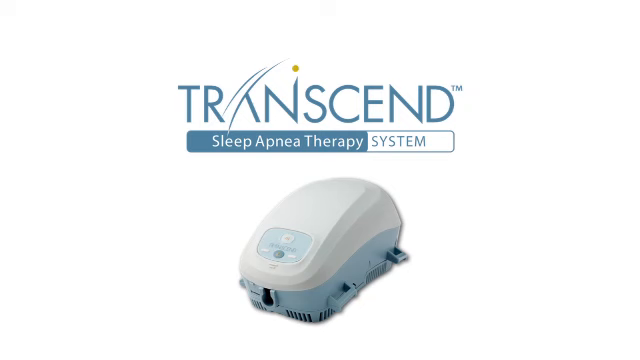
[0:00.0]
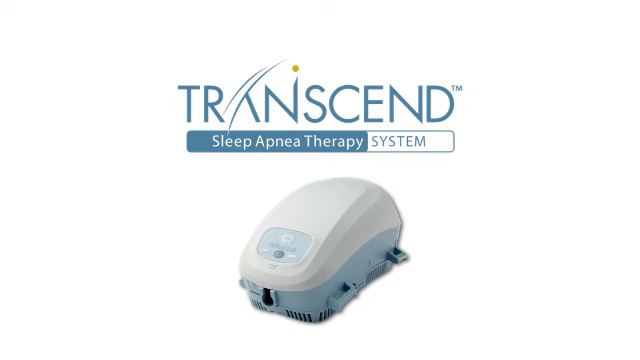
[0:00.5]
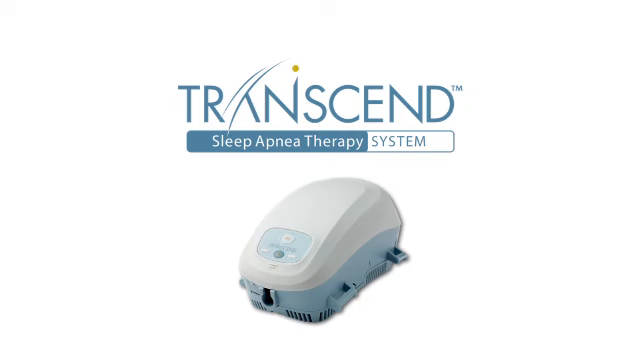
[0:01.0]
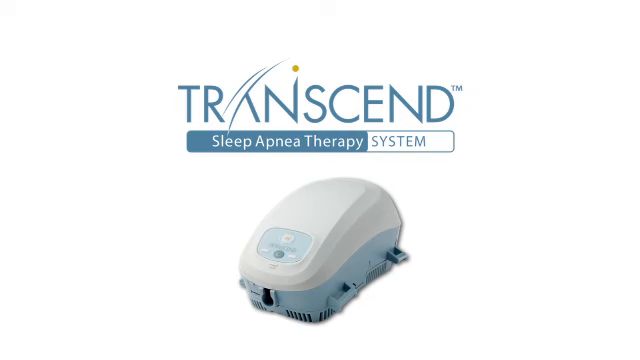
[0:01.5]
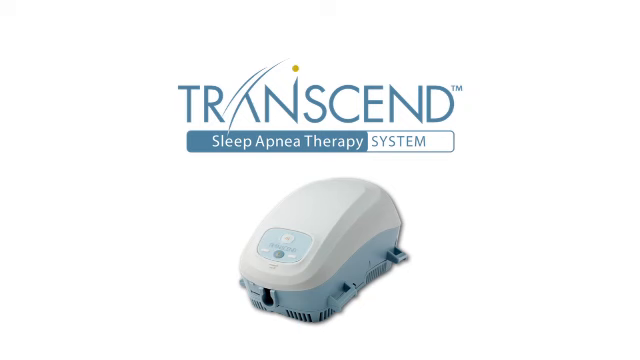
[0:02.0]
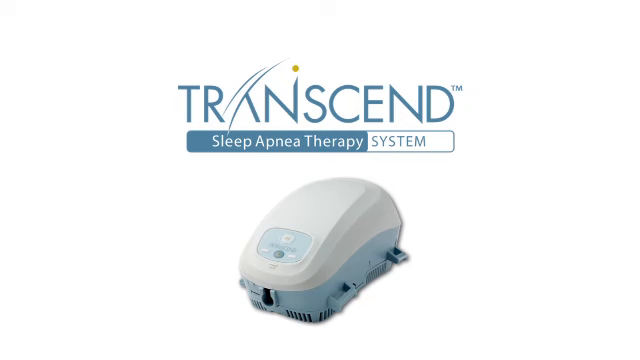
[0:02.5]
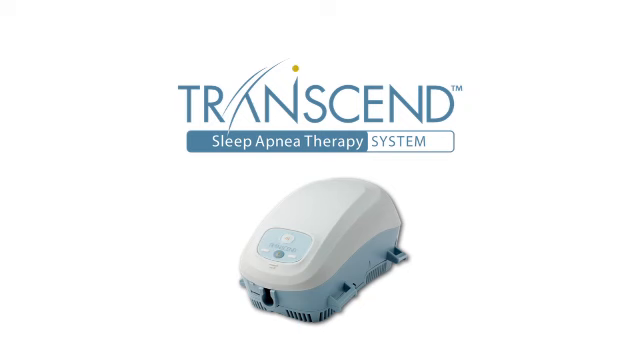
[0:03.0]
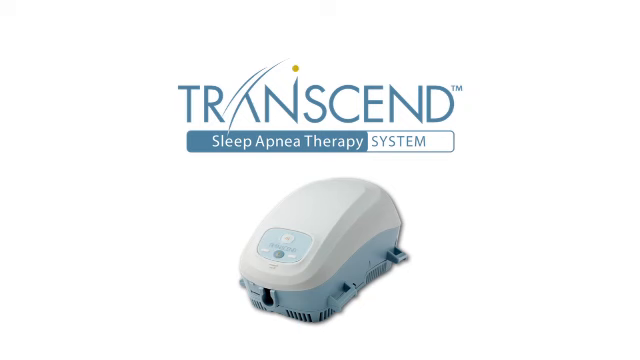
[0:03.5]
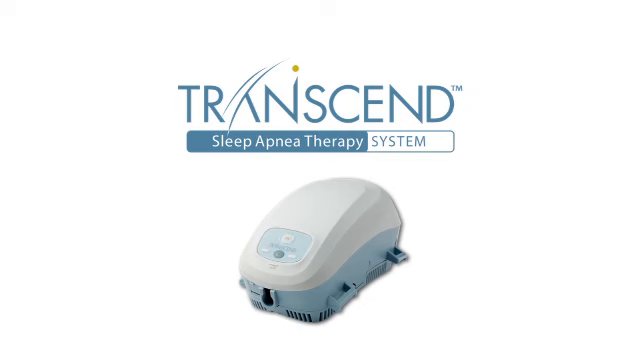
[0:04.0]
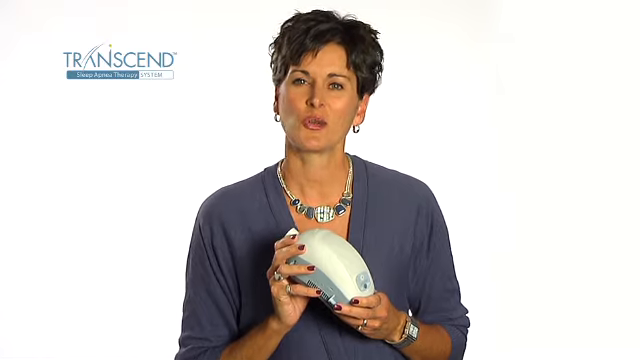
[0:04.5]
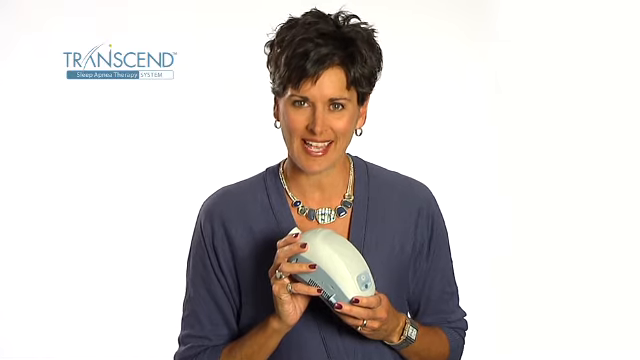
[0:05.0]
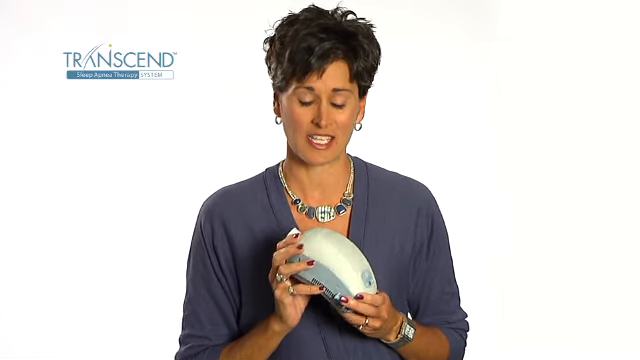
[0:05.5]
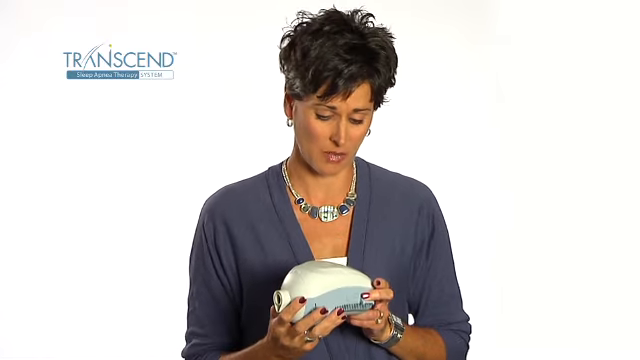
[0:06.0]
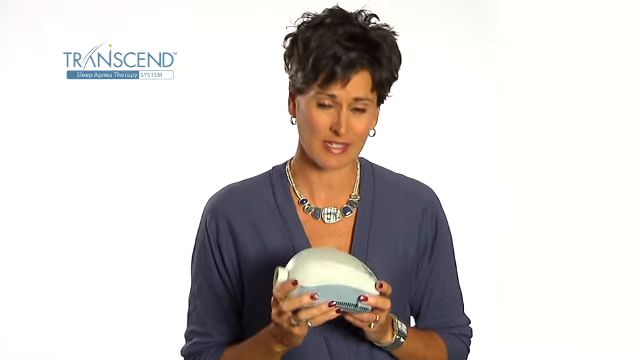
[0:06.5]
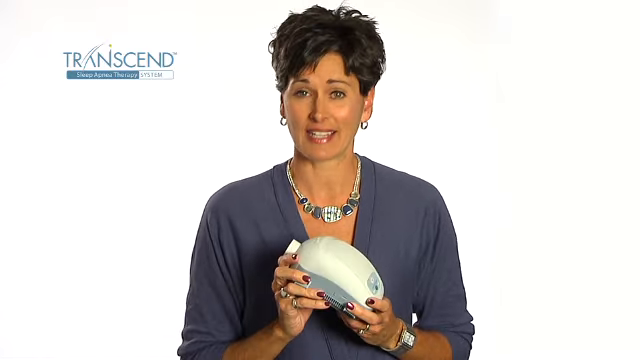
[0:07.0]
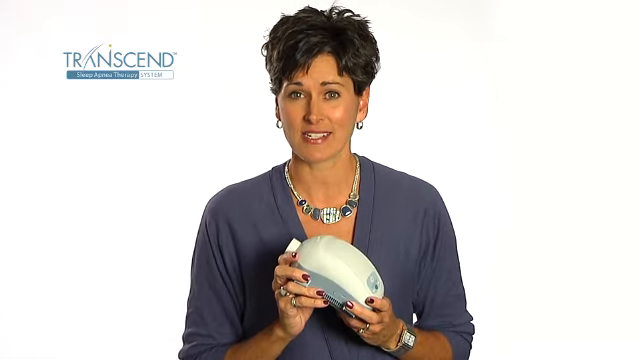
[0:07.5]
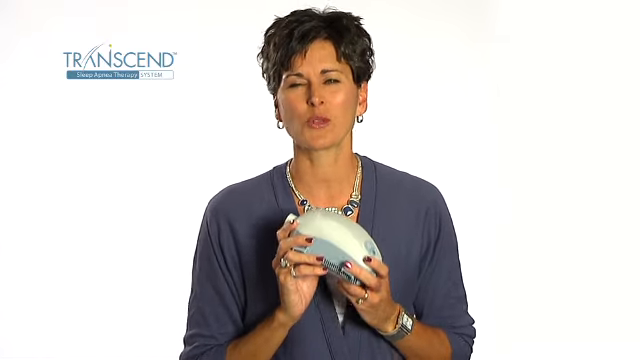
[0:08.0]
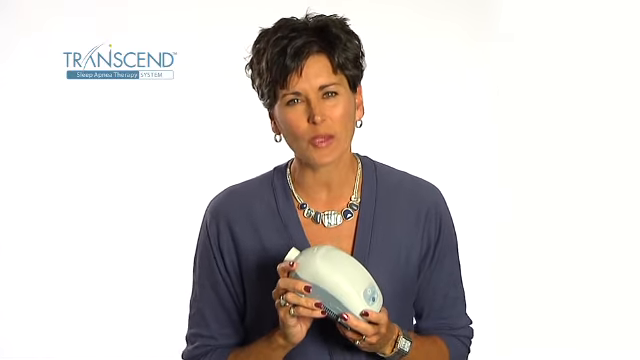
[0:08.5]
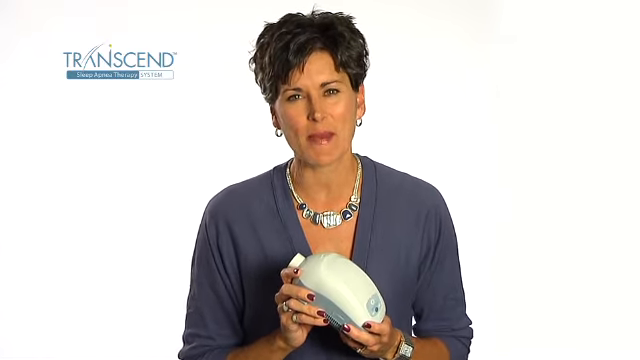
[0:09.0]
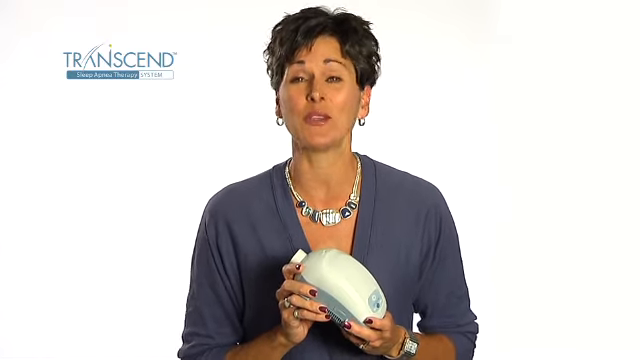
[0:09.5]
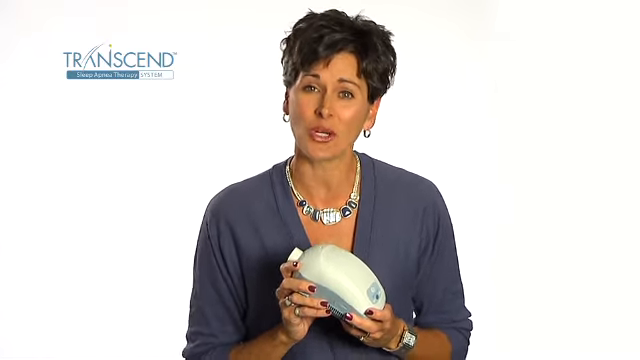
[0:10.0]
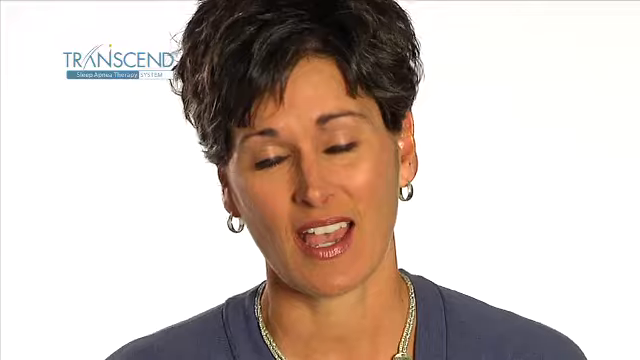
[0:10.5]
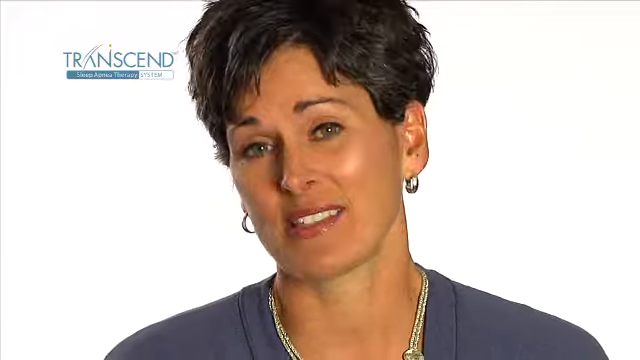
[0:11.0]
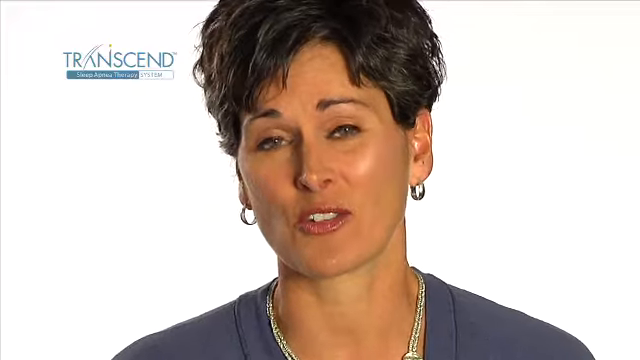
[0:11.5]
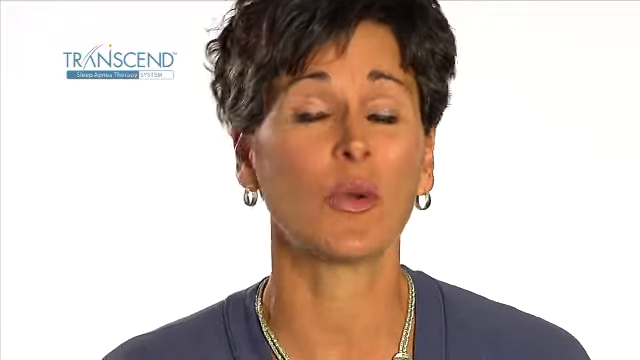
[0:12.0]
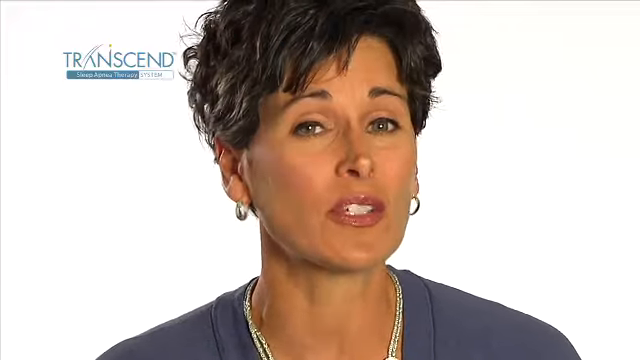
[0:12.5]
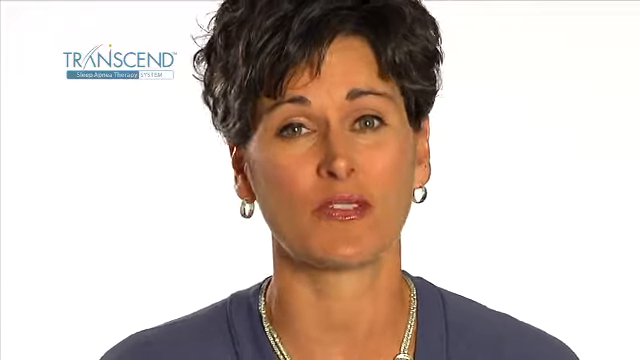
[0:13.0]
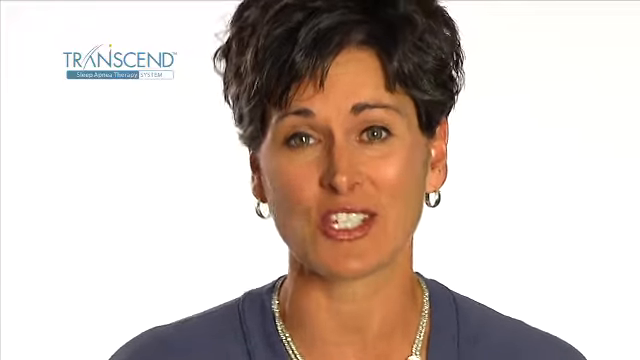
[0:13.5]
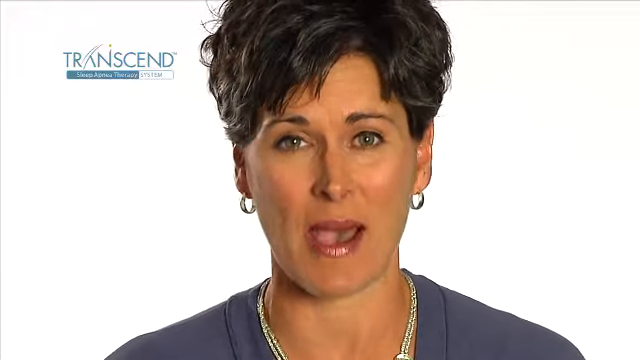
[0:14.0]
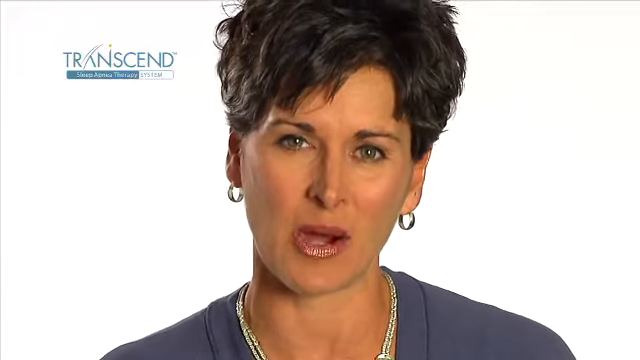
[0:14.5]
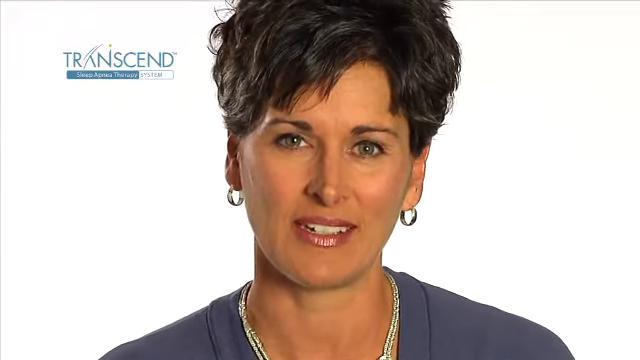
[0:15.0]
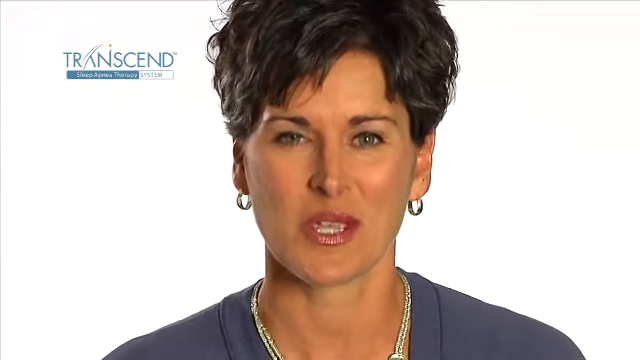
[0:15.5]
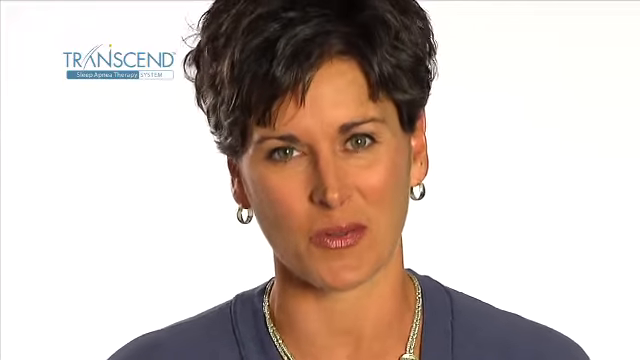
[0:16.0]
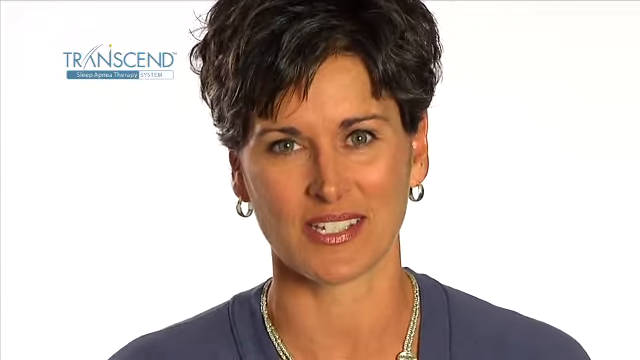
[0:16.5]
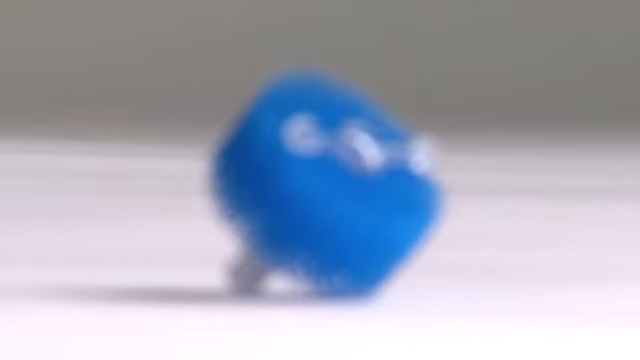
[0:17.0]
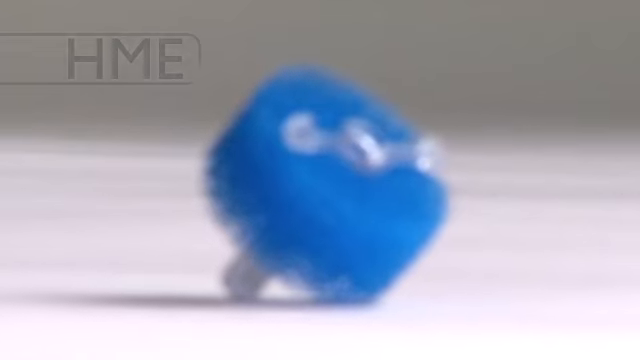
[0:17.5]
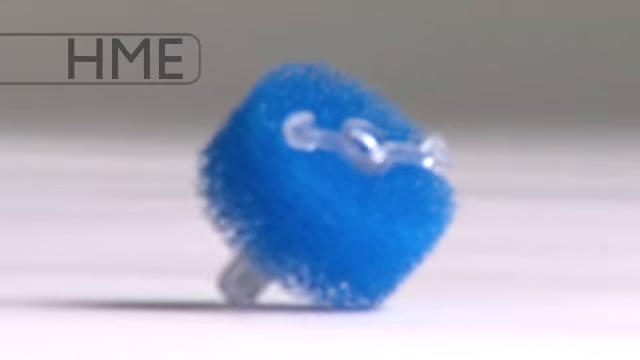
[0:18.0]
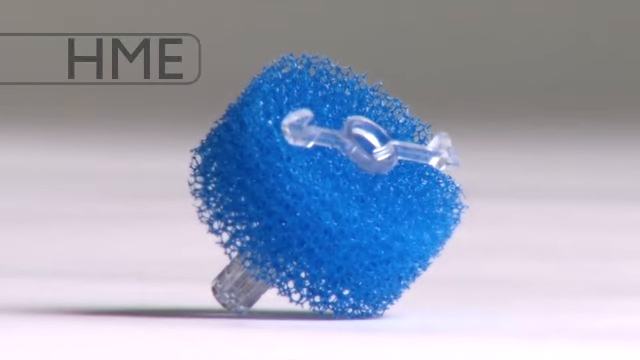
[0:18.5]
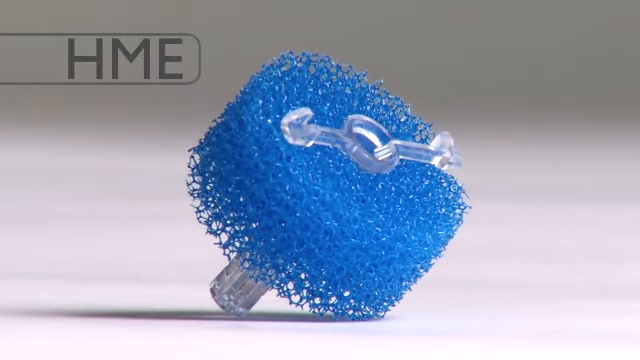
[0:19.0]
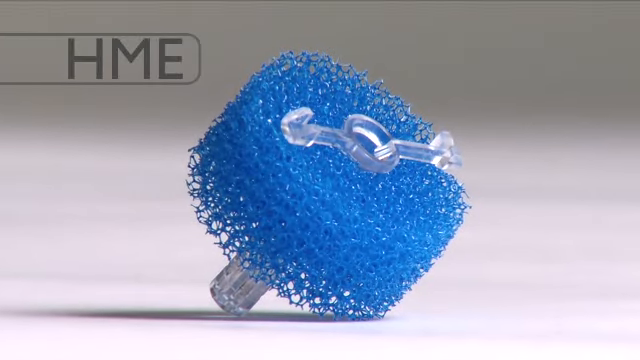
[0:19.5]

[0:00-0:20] An attractive woman appears on the screen, speaking to the camera. She has hazel-colored eyes, arched brown eyebrows, and a pointy nose whose sides are slightly higher, so some of the inside of her nose is visible from the front. Her short brown hair is layered, with a slight part in the front on the left side of her head. She wears a dark gray shirt with three-quarter sleeves and a silver gemstone necklace with five different stone sizes, the largest stone, which has curved corners, in the middle. In both hands she holds a device called Transcend, a sleep apnea therapy device: her right hand holds the back end, pointed upward, and her left hand holds the front end, which has the on-off indicator, pointed downward.